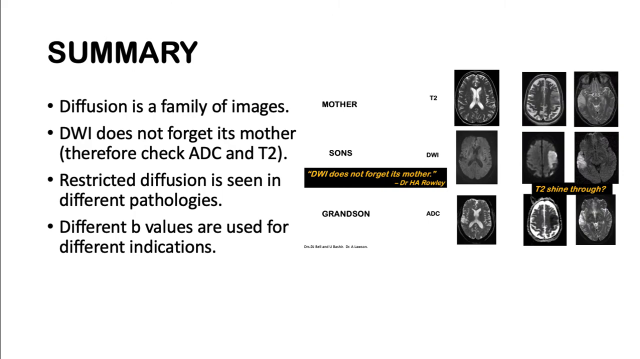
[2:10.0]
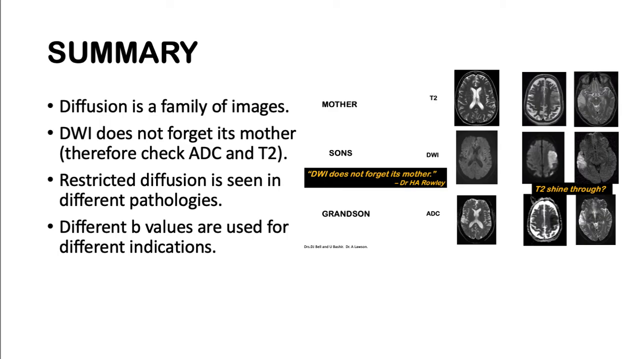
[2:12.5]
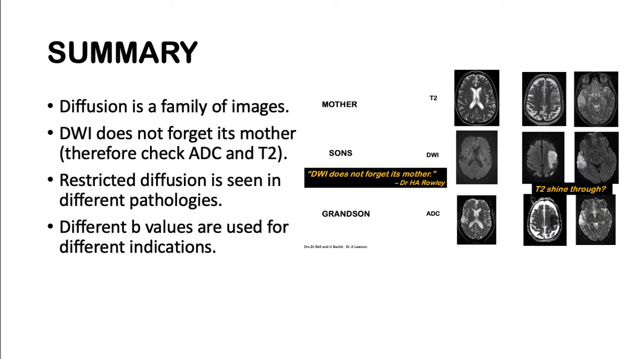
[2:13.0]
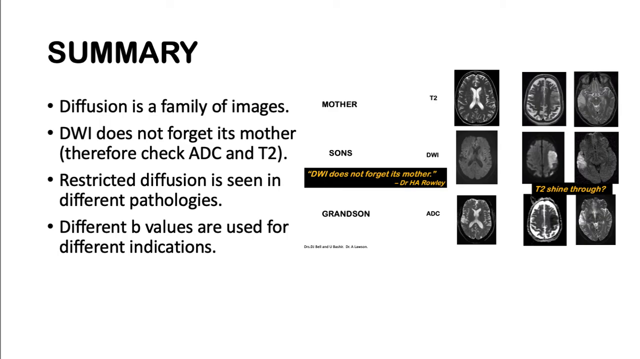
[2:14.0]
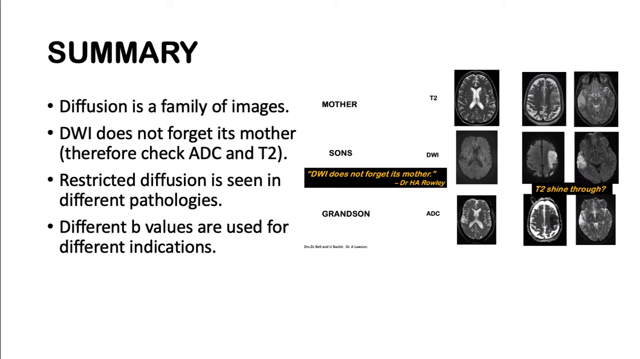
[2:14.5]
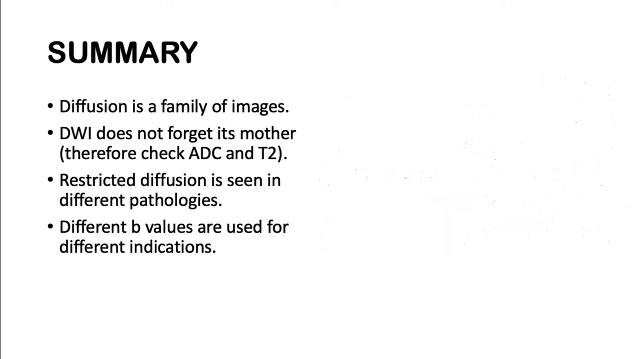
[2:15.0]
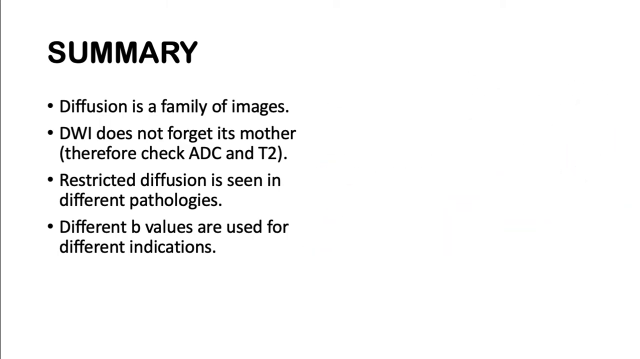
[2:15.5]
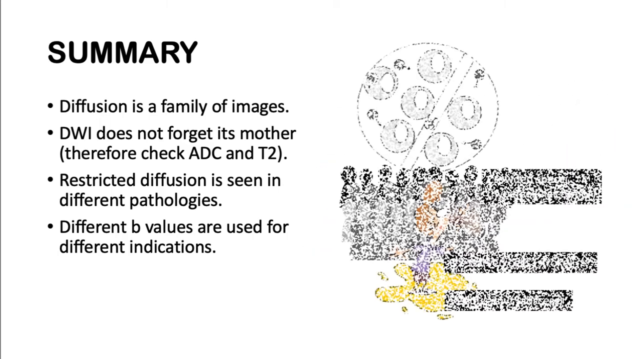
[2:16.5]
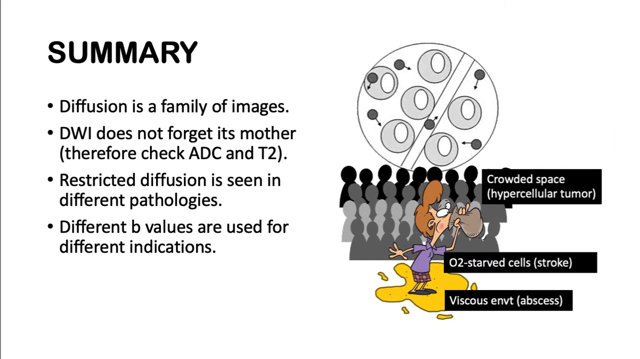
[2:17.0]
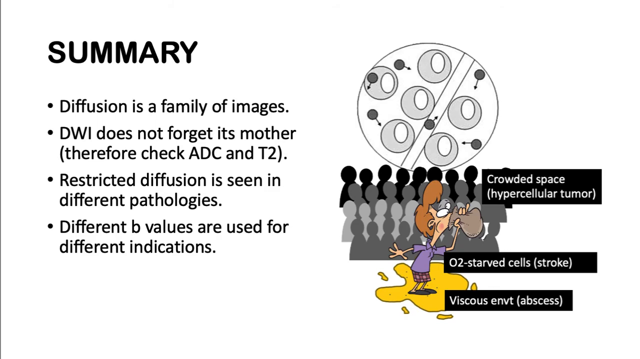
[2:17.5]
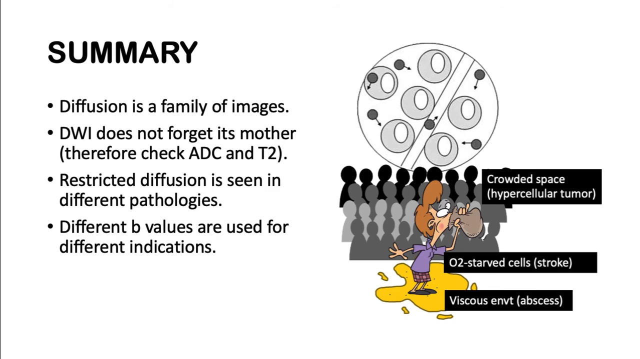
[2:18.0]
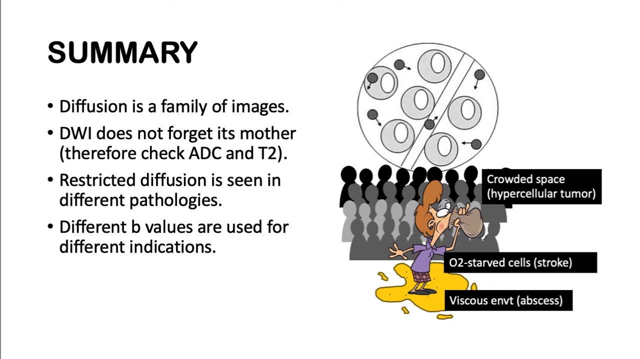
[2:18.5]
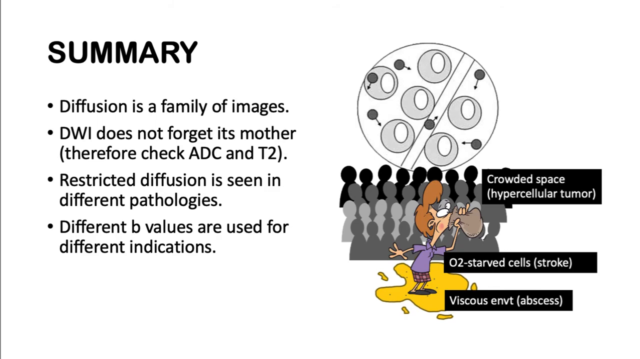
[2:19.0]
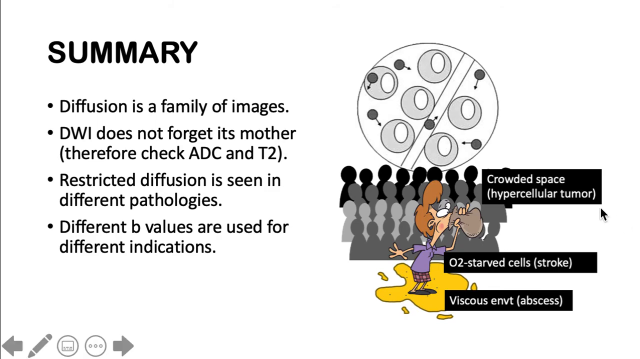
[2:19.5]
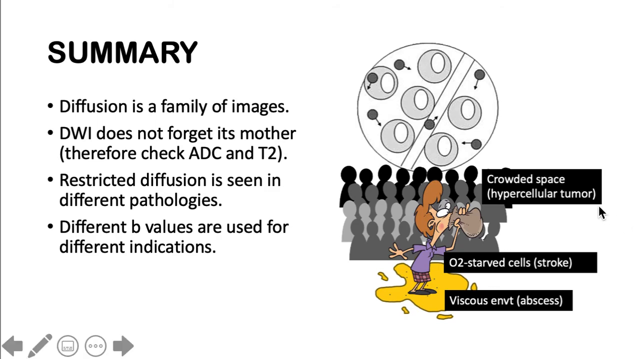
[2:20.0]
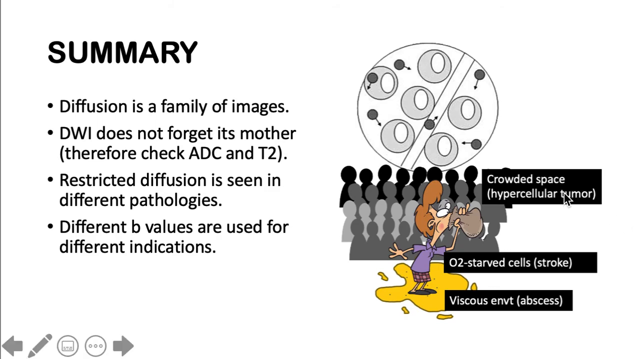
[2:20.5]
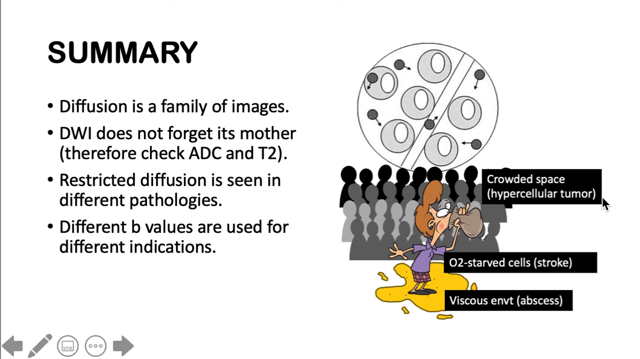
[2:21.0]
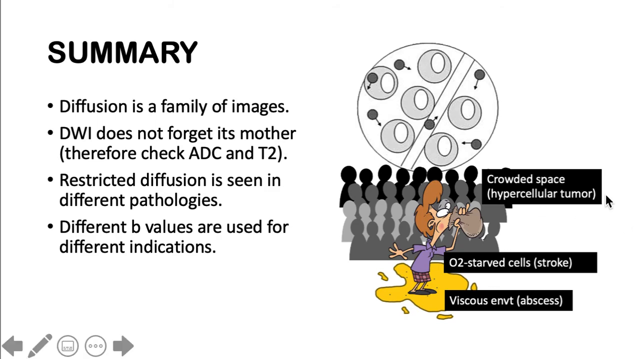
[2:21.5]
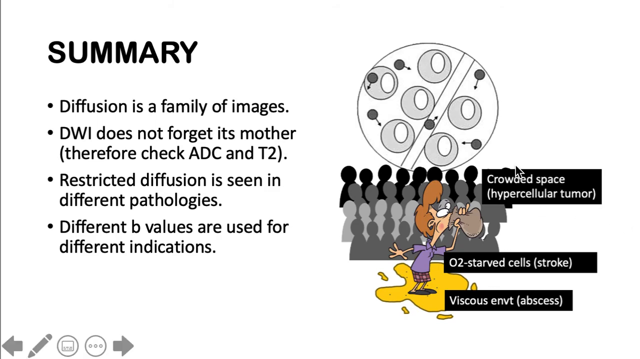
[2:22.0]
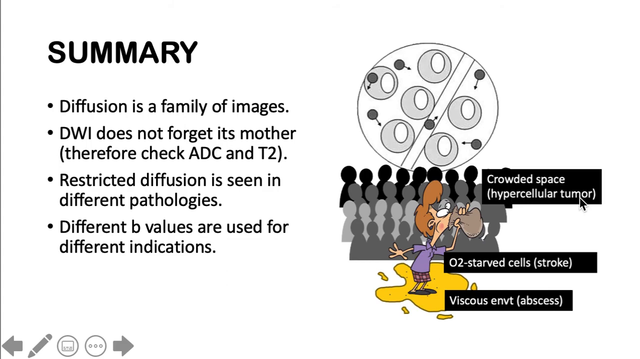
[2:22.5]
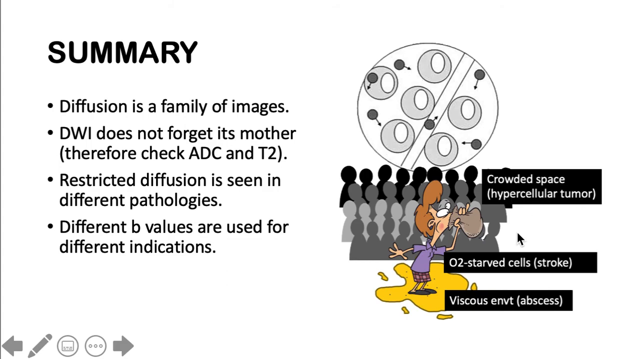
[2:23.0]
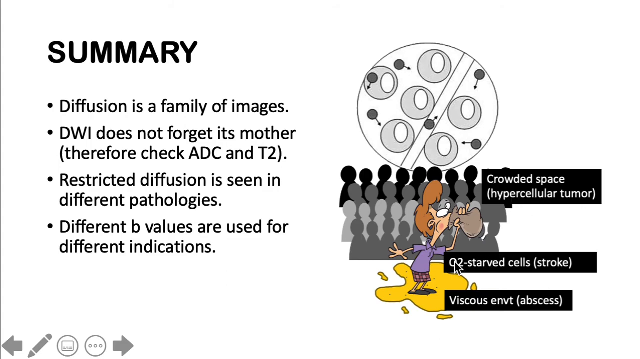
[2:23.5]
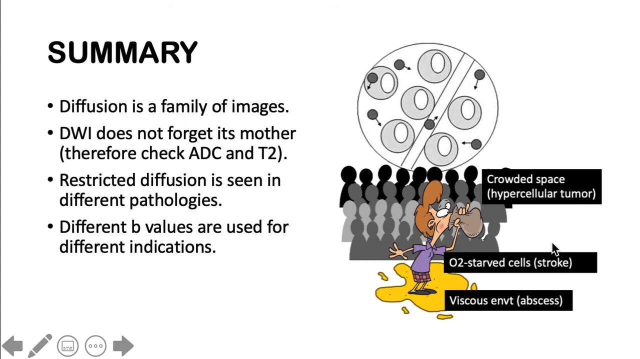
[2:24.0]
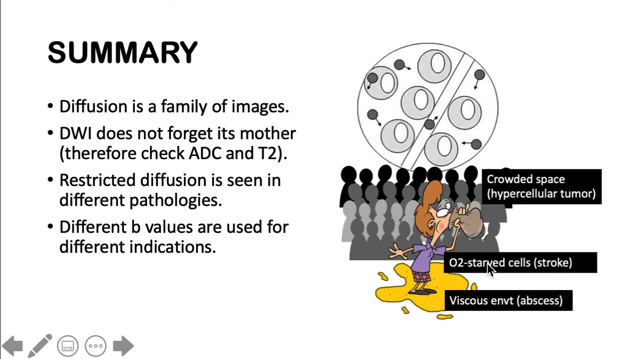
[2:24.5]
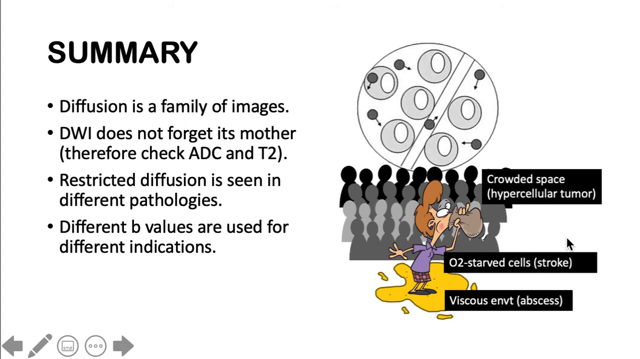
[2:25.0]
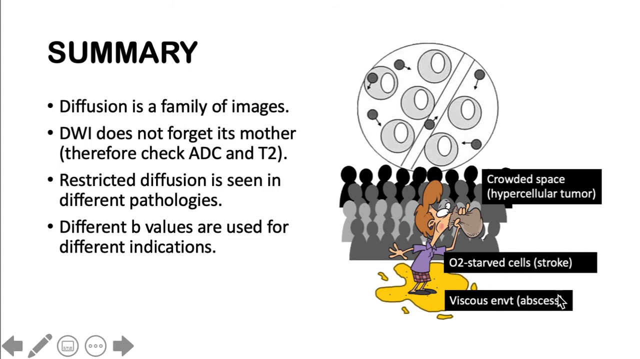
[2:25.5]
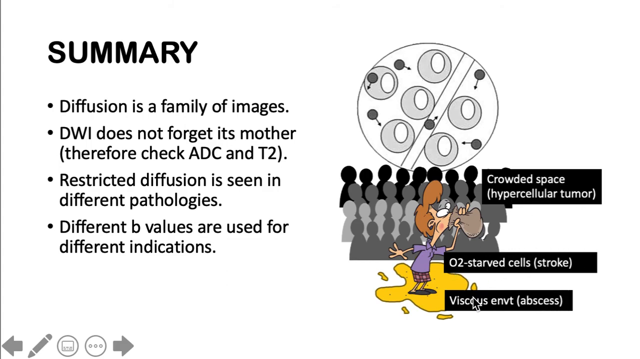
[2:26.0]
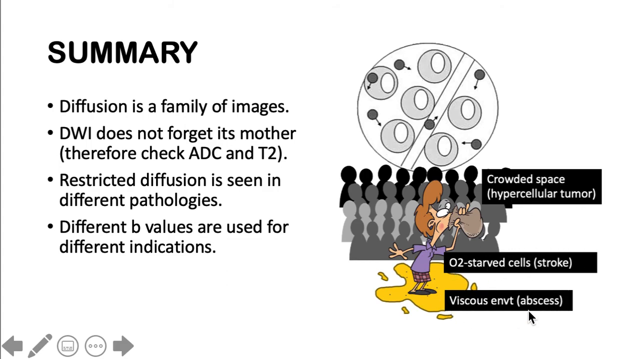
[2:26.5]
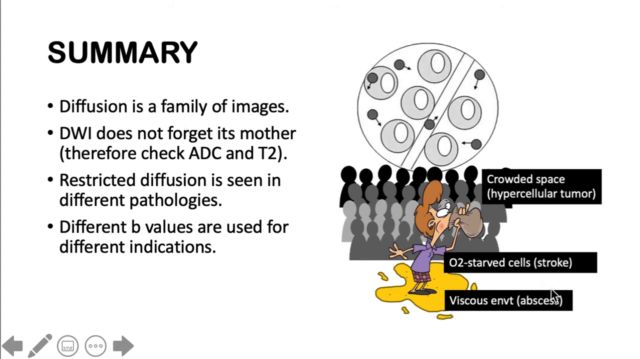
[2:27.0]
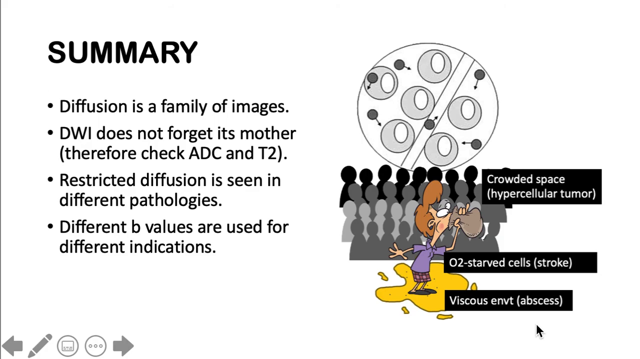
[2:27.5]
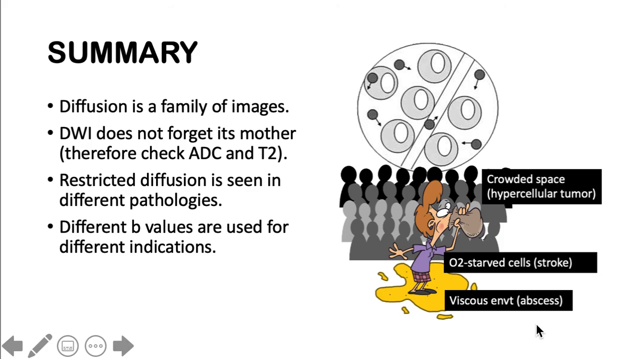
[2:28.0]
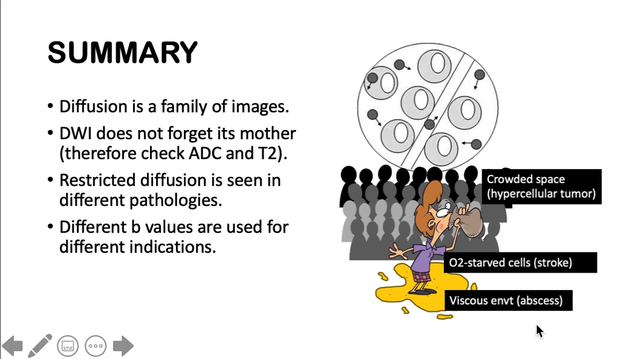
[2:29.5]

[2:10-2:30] A title reads "Summary" in black capital letters against a white background. Below it is a list of four bullet points: "Diffusion is a family of images," "DWI does not forget its mother, therefore check ABC and T2," "Restricted diffusion is seen in different pathologies," and "Different B values are used for different indications." The words "mother," "sons," "grandsons," "T2," "DWI" and "ABC" are also visible. A small text box with a black background reads "DWI does not forget its mother, Dr. H.A. Rowley" in yellow lettering, and another black text box with yellow font reads "T2 shine through." Several images of the different scans are on the white background. The scans then fade away, and a circle appears with a crowd of people in front of it and the text "crowded space, hypercellular tumor, O2 starved cell stroke, viscous ENVT, abscesses."